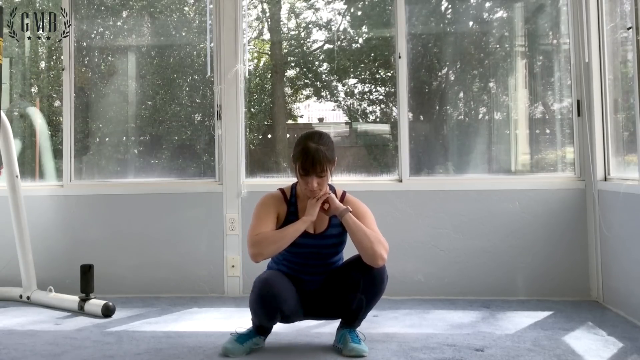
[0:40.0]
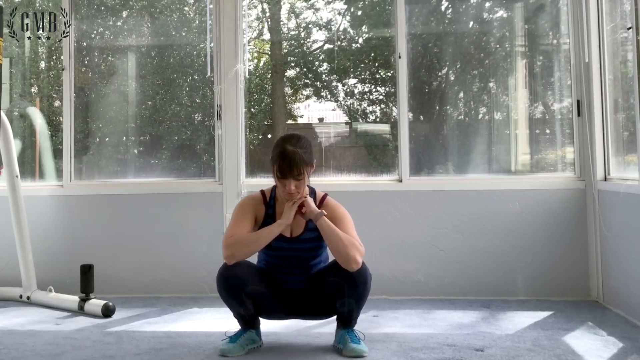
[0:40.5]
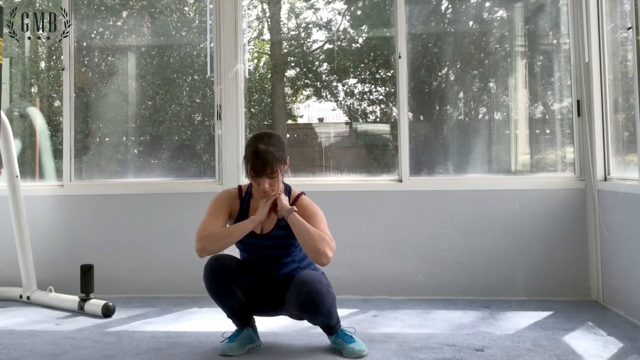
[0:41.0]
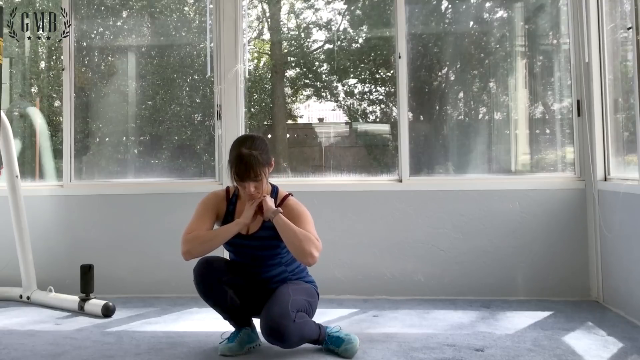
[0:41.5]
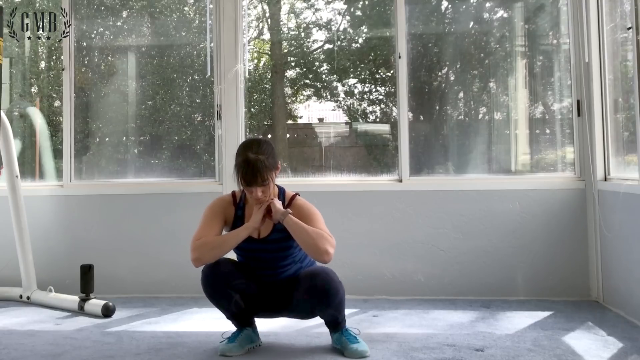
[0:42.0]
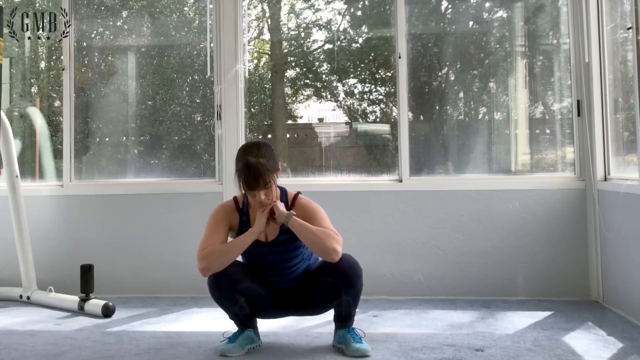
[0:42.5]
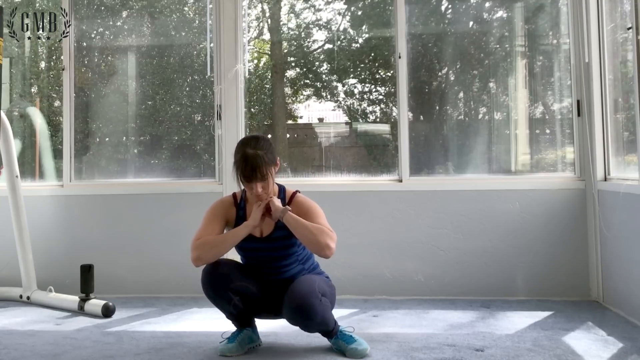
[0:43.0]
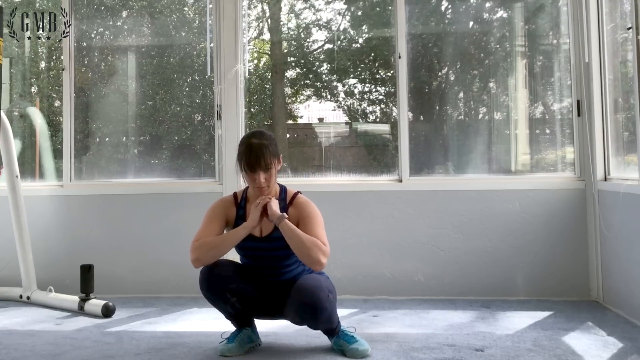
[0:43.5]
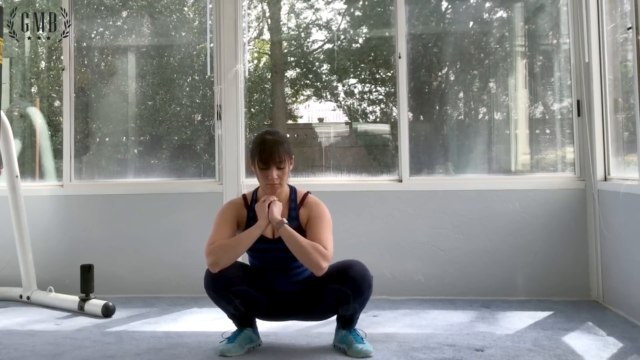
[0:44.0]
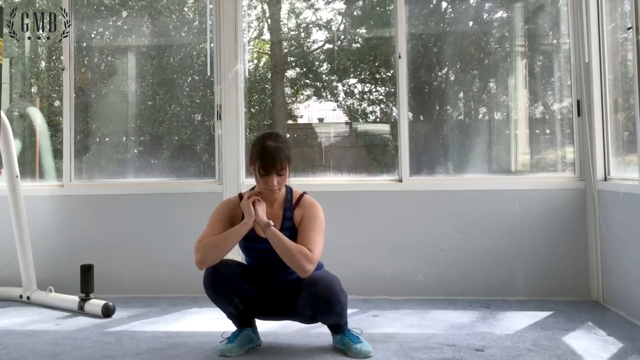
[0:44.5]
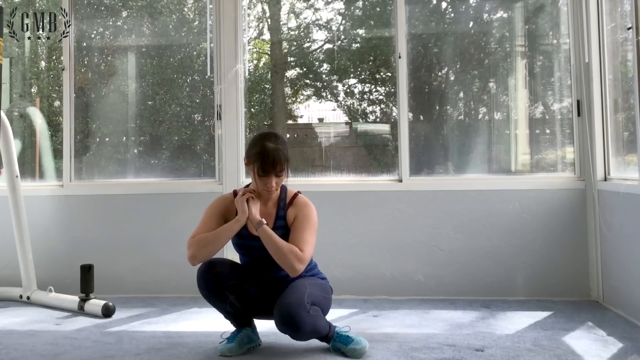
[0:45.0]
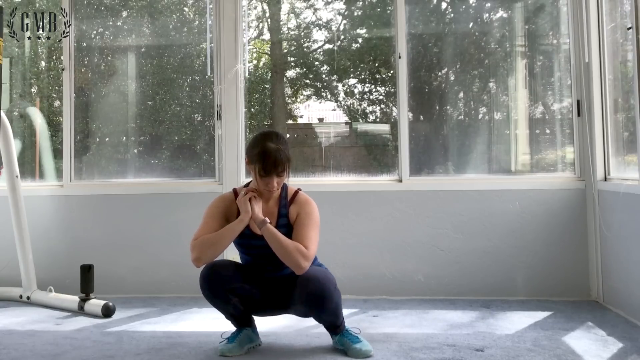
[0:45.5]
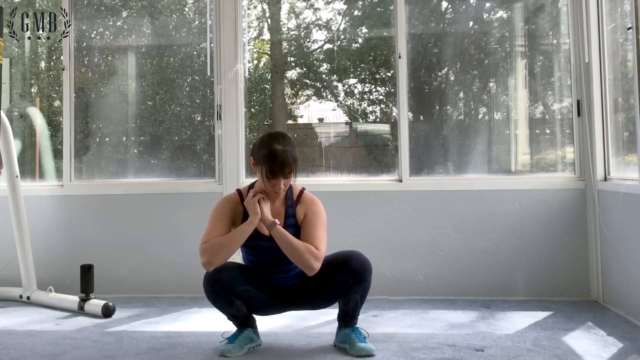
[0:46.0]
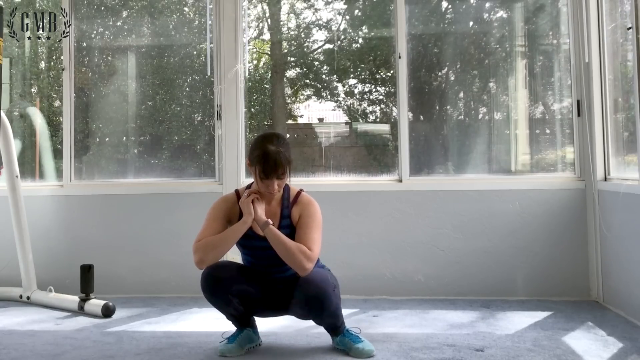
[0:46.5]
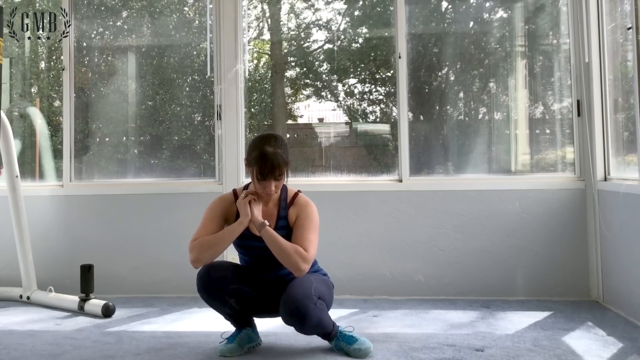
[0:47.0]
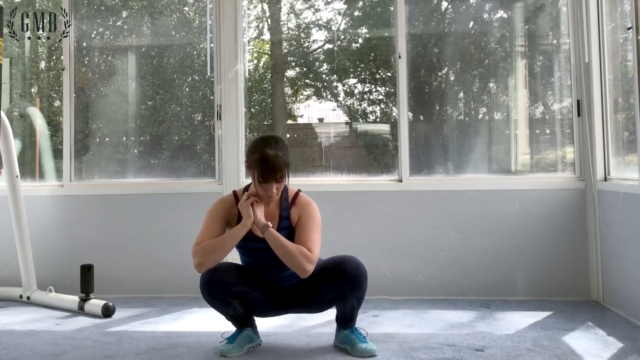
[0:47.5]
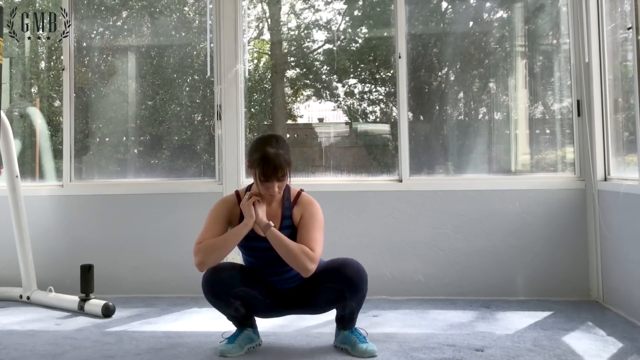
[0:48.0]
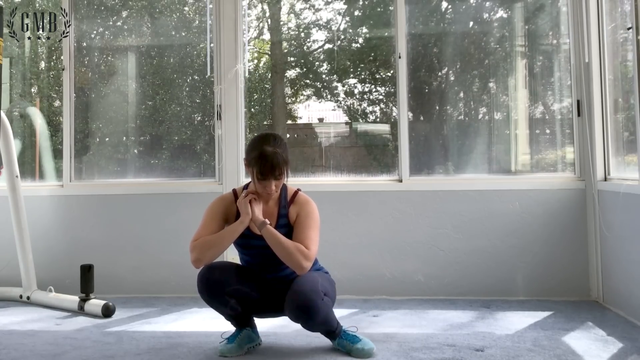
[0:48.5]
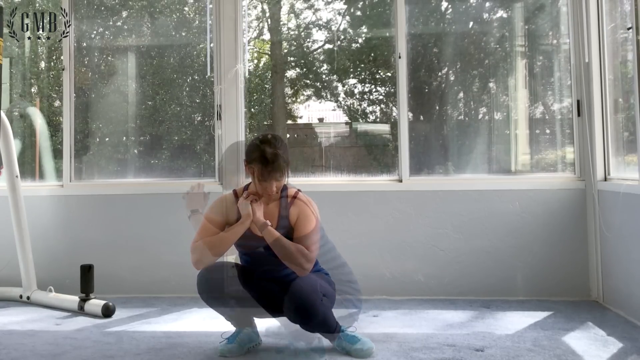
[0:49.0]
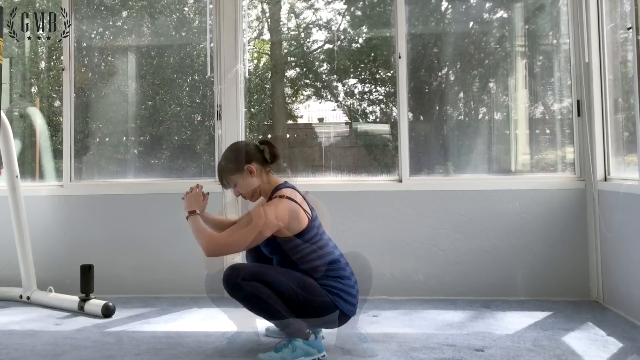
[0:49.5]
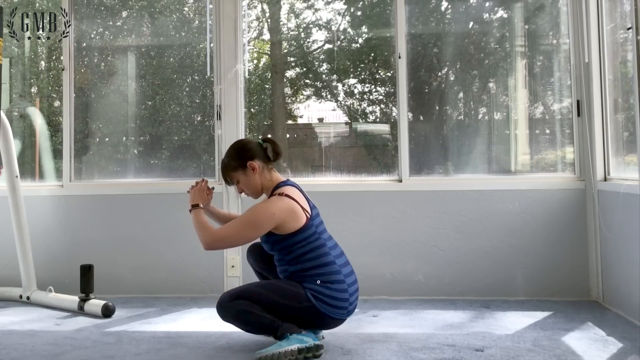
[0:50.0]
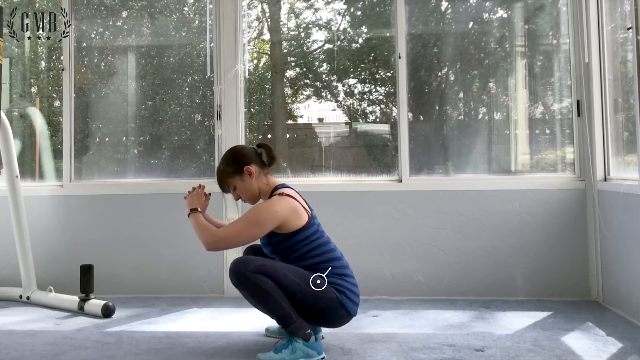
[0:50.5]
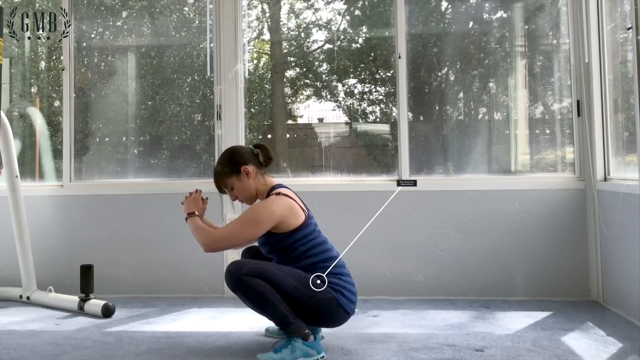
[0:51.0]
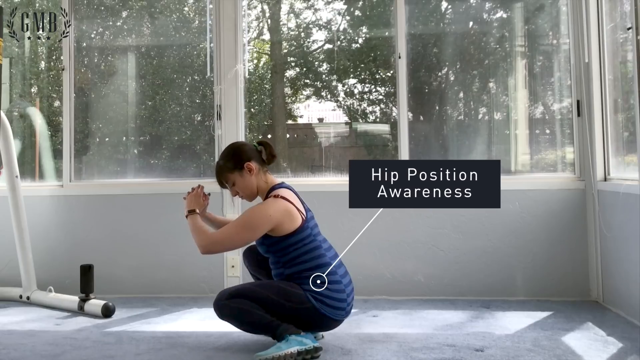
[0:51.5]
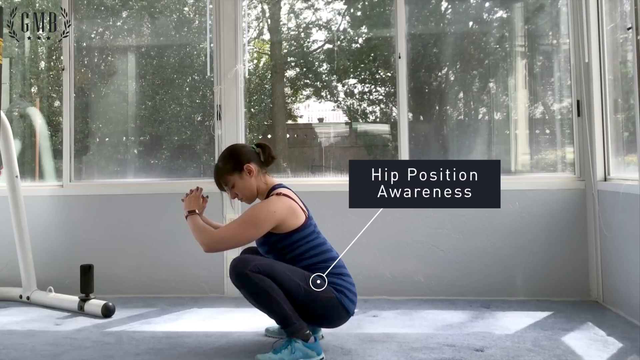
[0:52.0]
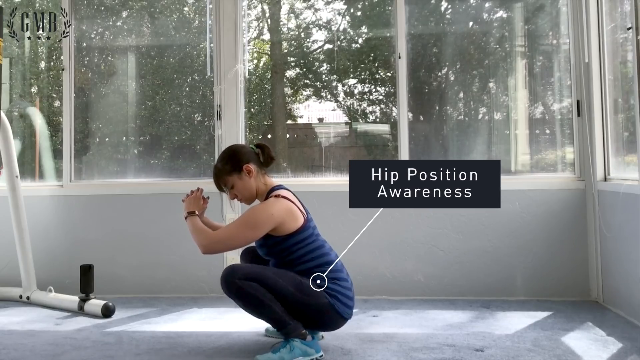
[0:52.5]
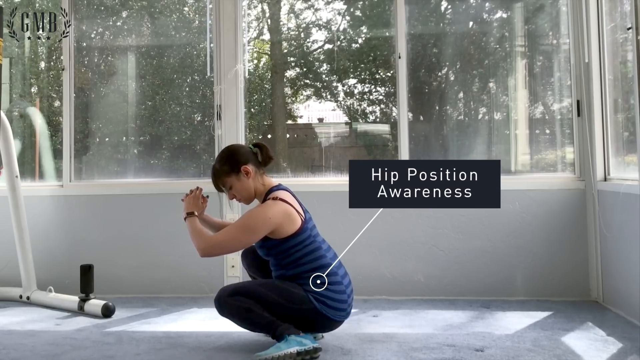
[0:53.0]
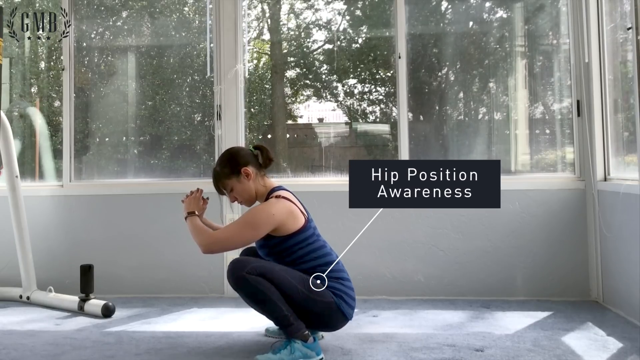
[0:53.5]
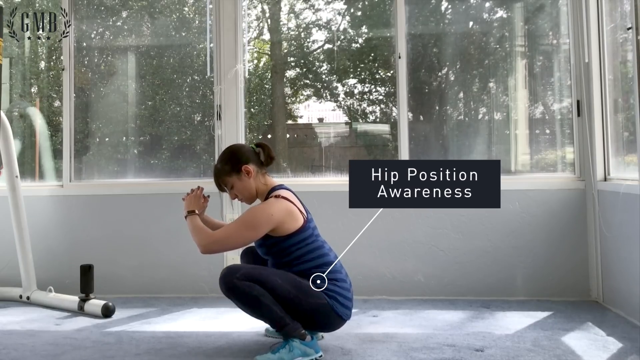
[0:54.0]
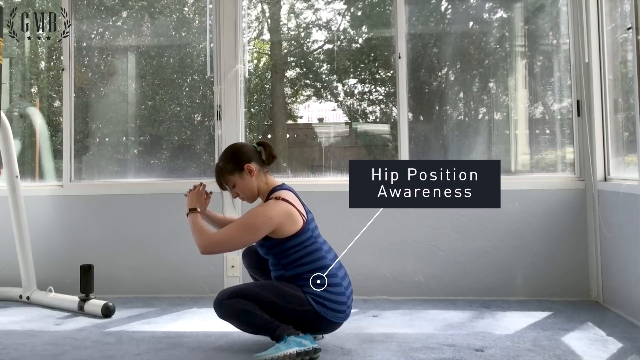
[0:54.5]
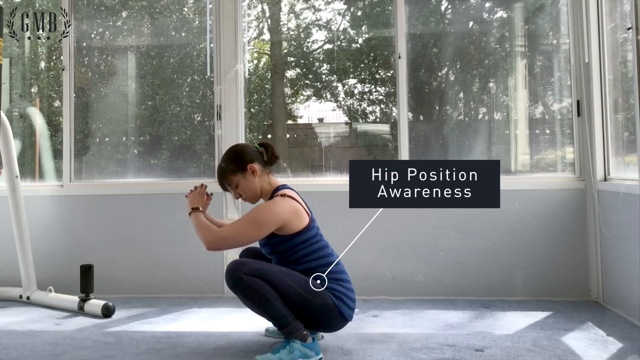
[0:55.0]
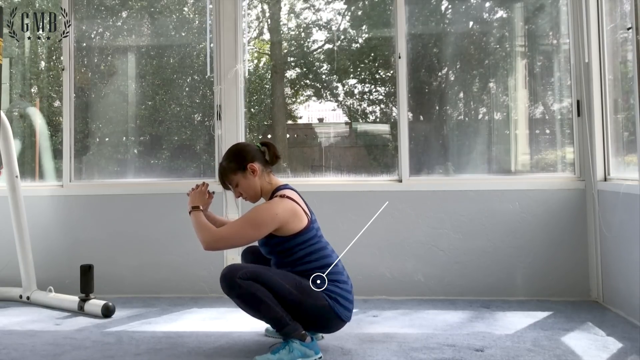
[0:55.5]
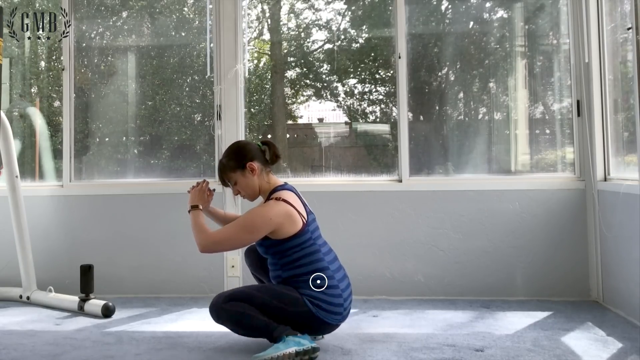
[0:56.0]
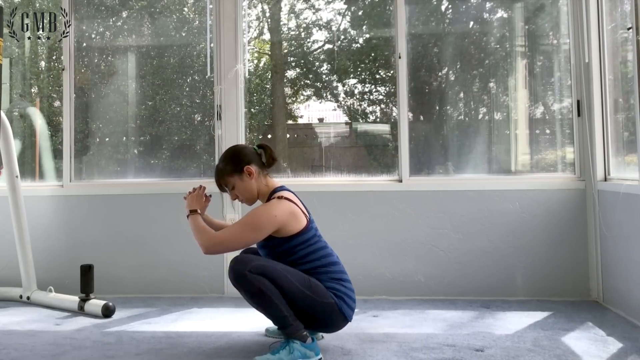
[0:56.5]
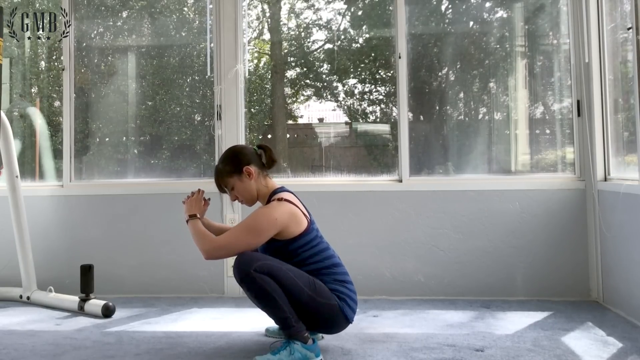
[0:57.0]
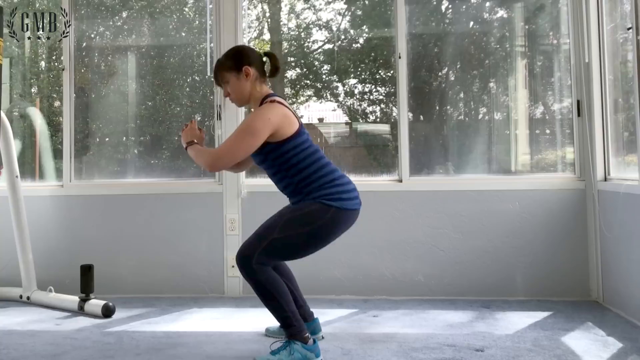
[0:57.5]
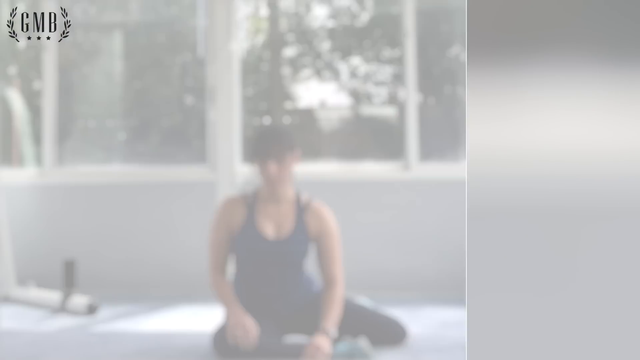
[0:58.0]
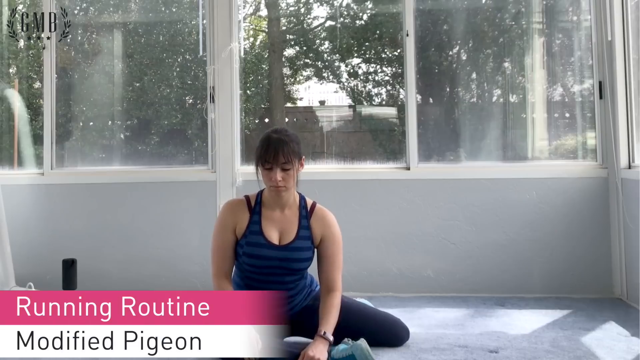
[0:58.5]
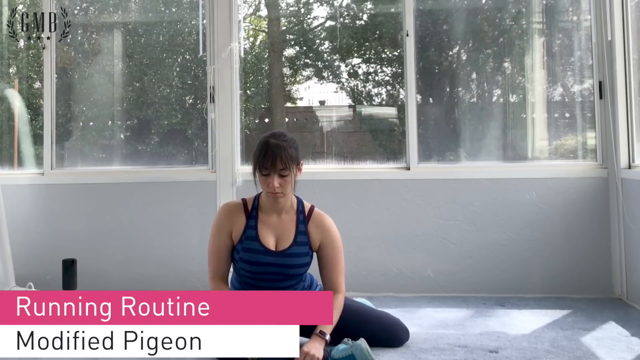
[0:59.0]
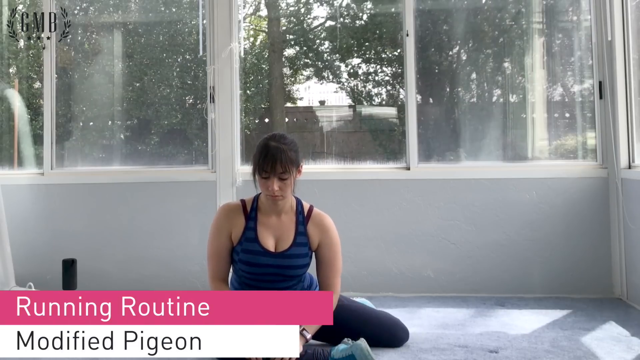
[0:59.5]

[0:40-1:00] A woman in a tank top of blue and black stripes and very tight blue pants is squatting down. Her left elbow is on her knee and her right elbow is just above her knee, with her hands underneath her chin as she looks down at the floor. Her left knee sticks up a little higher than the right. She slowly rotates toward the left so that her knees are pretty much even, then her left knee suddenly sticks up quite a bit higher so that the right knee comes down very far, almost to the ground, before she puts it back. She does this several times, watching her knee the entire time. The shot transitions to a different position: she faces toward the left, still squatting, her head facing down and her hands clasped together in front of her face, even with her eyes. A white dot with a circle around it appears on her hips, and a line comes up from it to a pop-up that says "hip position awareness." While it is there, she keeps moving her leg in and out in front of her with her knees bent very tightly. Then the line, the pop-up and the dot disappear. The woman stands up, the video goes to another screen, and a pop-up comes across the bottom that says "Running Routine."